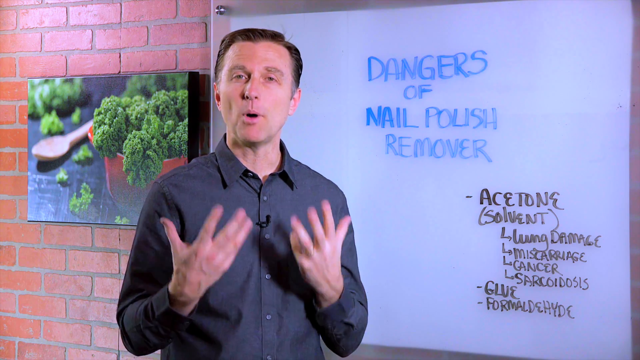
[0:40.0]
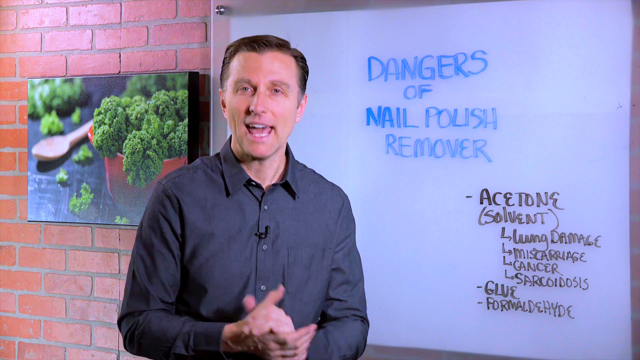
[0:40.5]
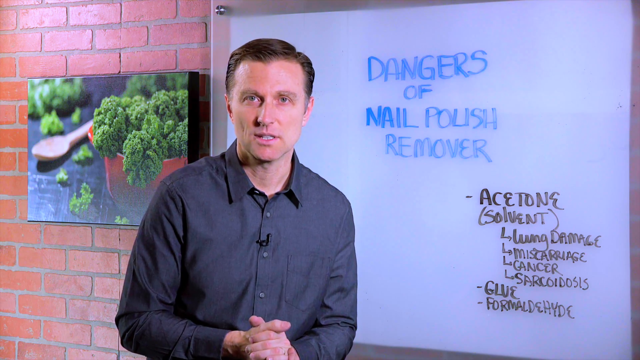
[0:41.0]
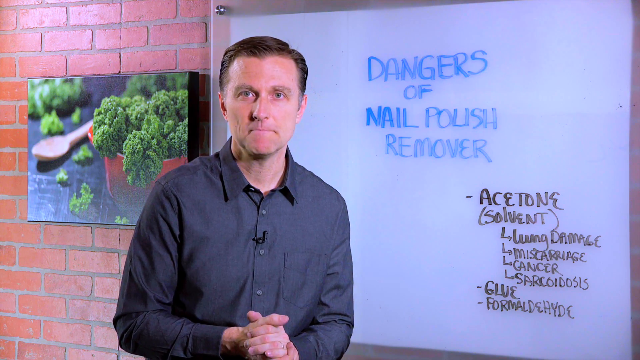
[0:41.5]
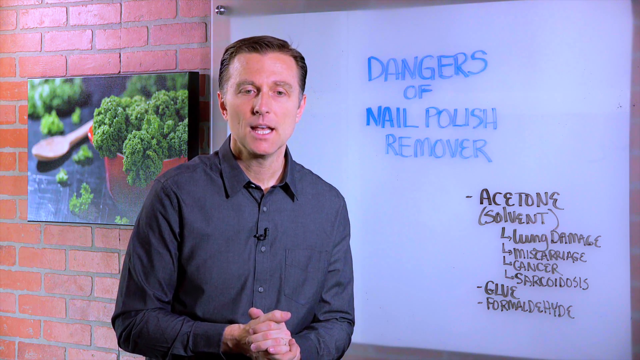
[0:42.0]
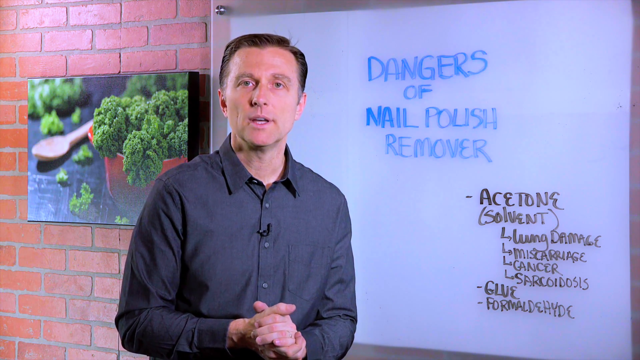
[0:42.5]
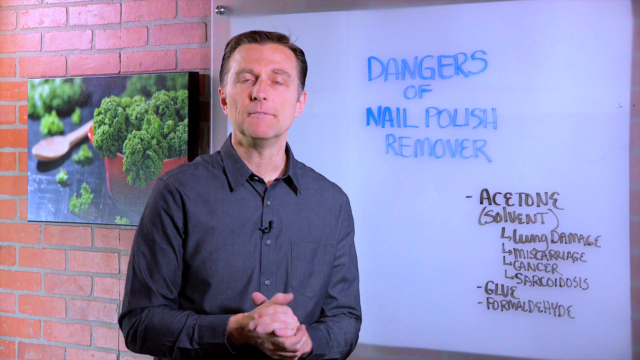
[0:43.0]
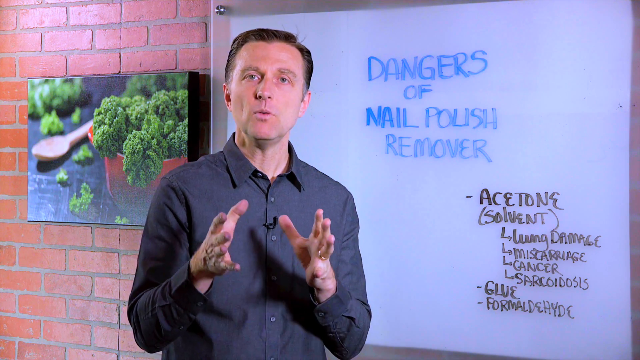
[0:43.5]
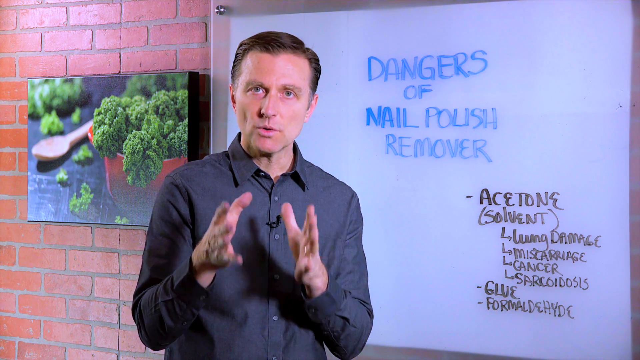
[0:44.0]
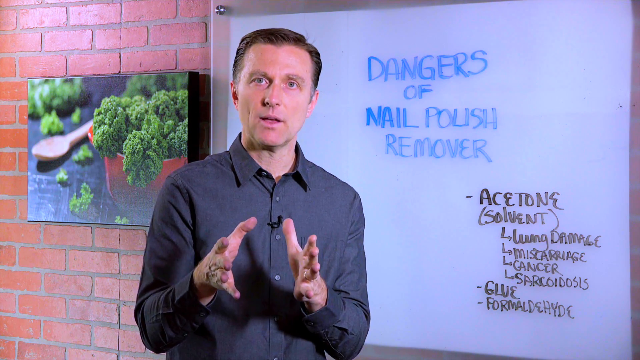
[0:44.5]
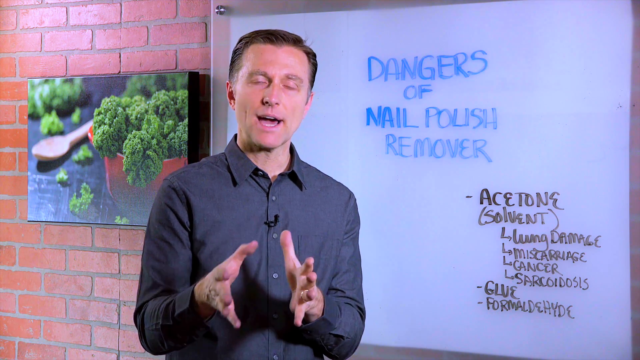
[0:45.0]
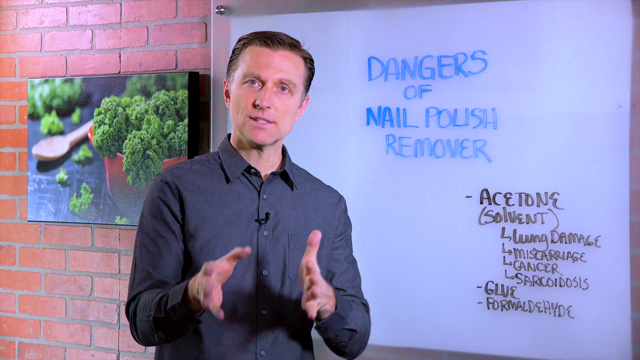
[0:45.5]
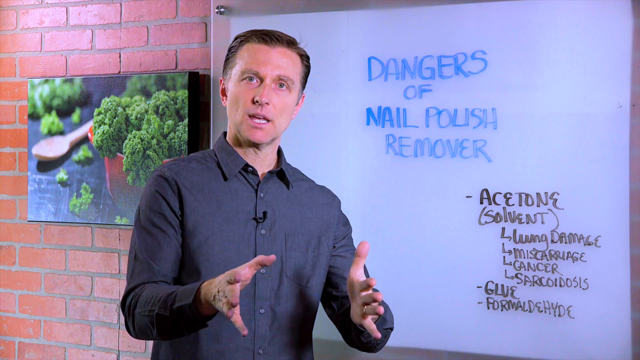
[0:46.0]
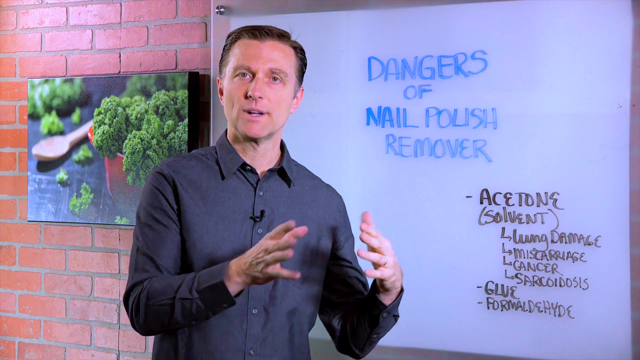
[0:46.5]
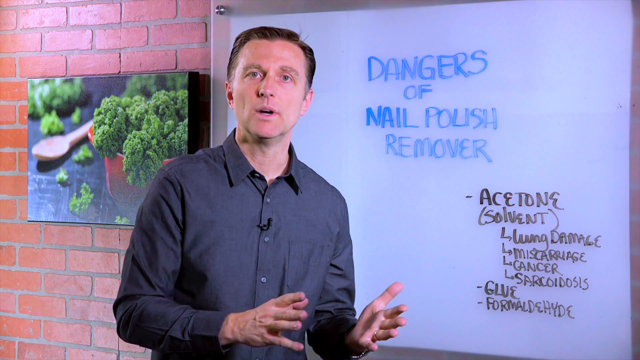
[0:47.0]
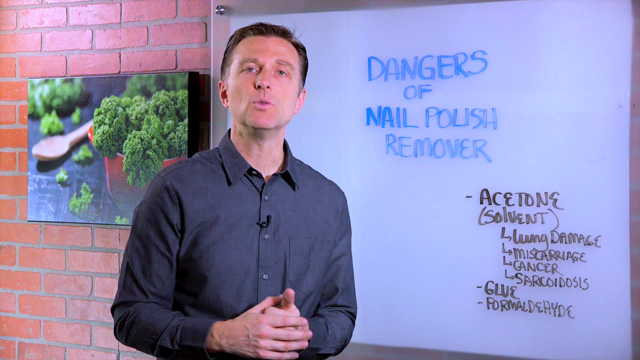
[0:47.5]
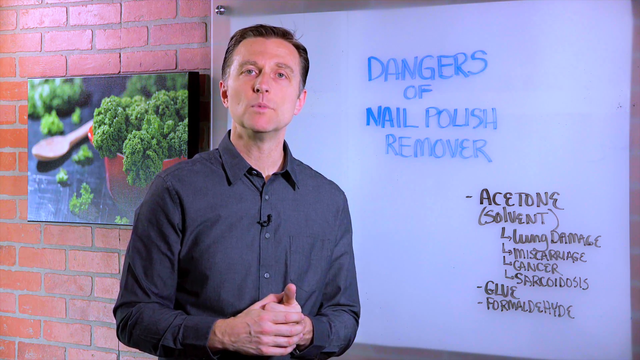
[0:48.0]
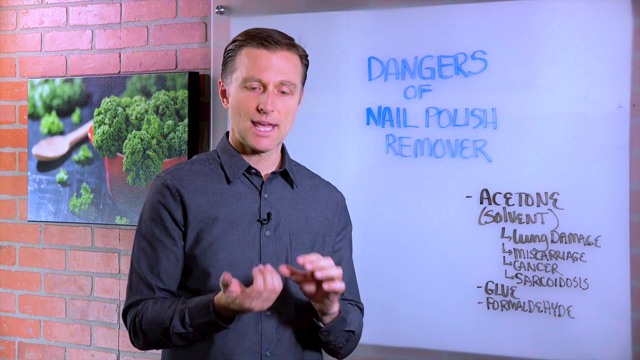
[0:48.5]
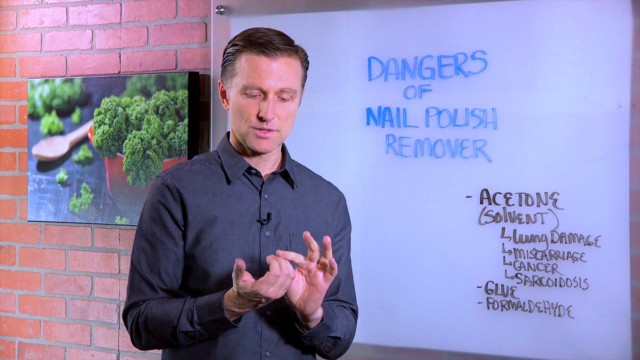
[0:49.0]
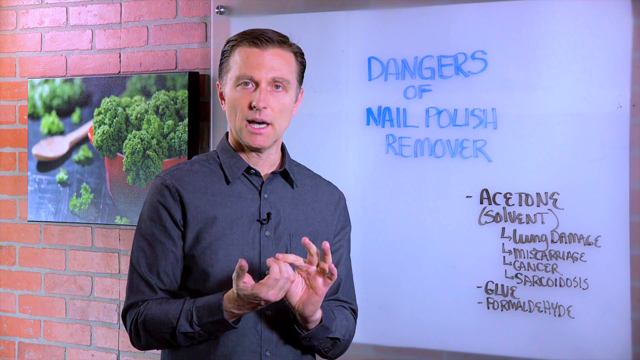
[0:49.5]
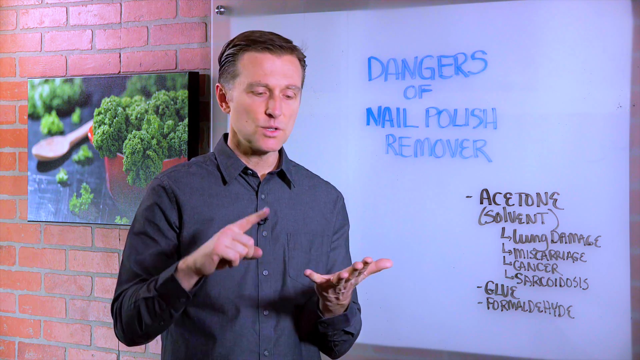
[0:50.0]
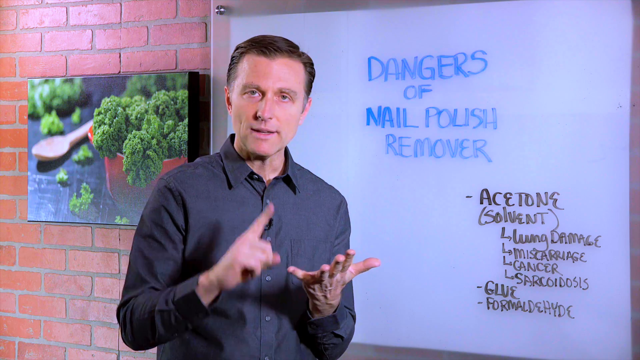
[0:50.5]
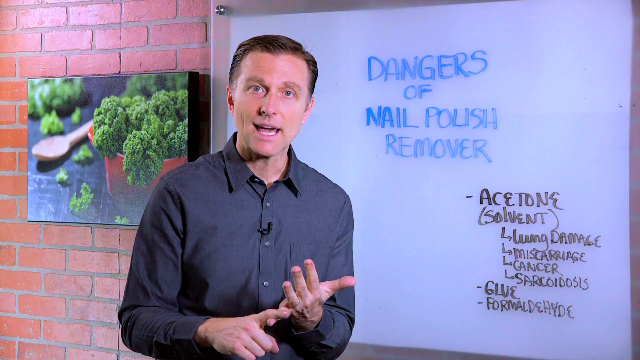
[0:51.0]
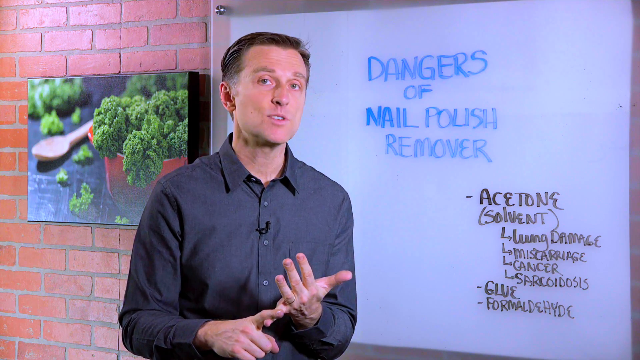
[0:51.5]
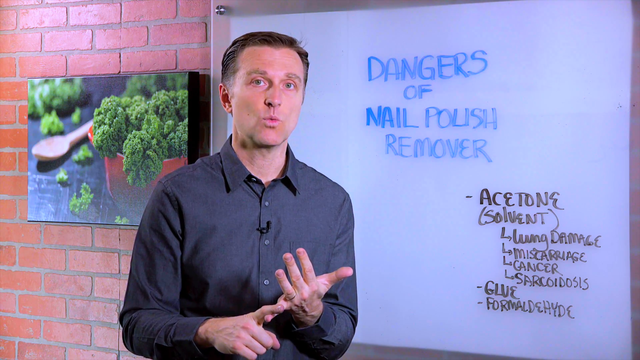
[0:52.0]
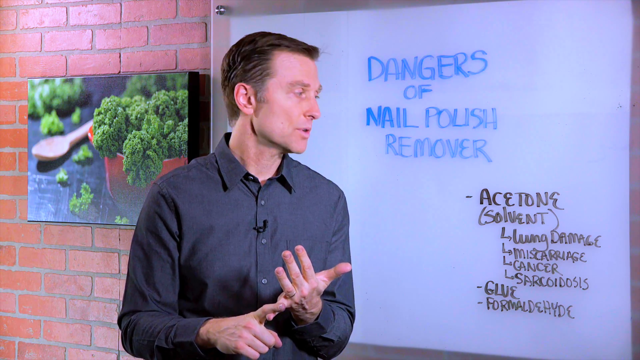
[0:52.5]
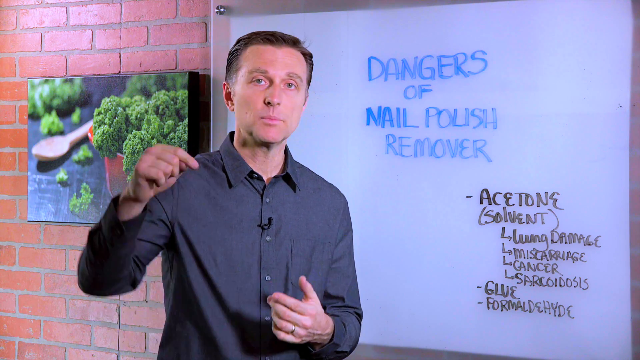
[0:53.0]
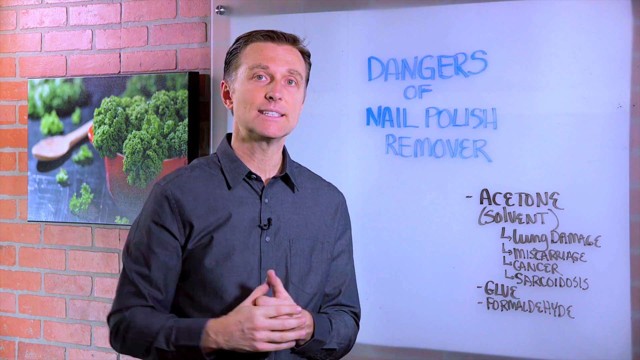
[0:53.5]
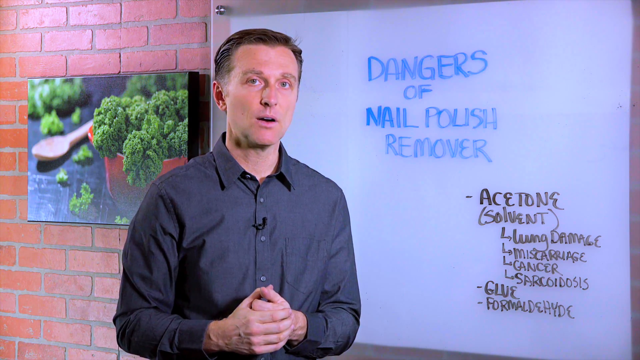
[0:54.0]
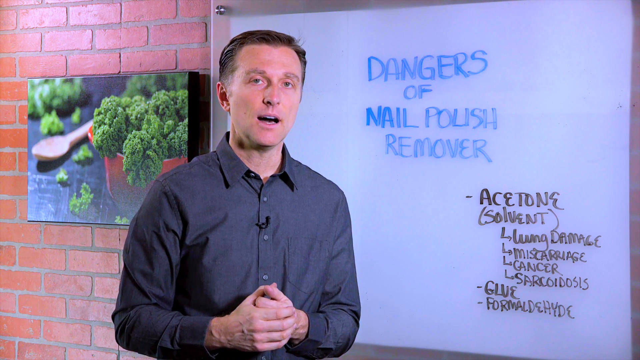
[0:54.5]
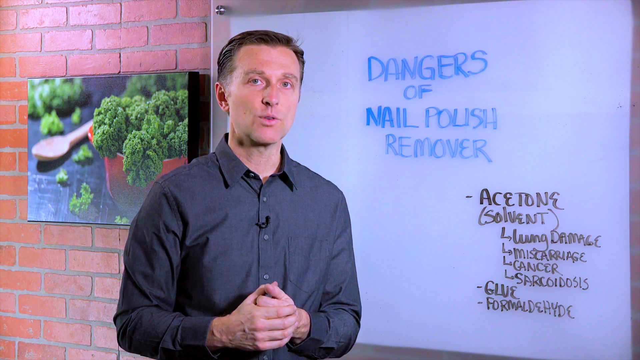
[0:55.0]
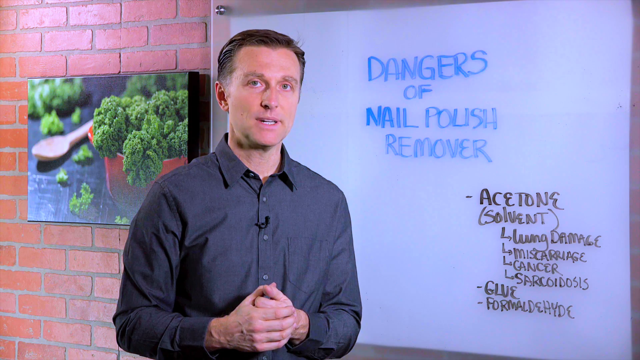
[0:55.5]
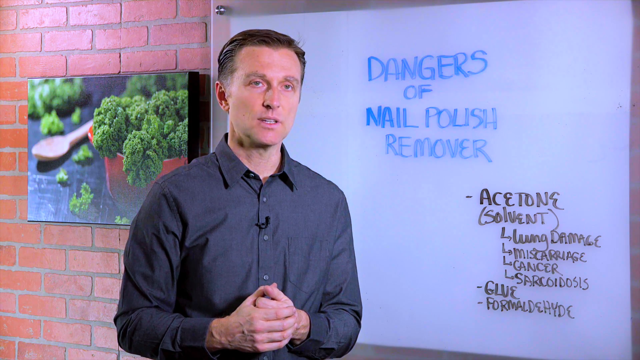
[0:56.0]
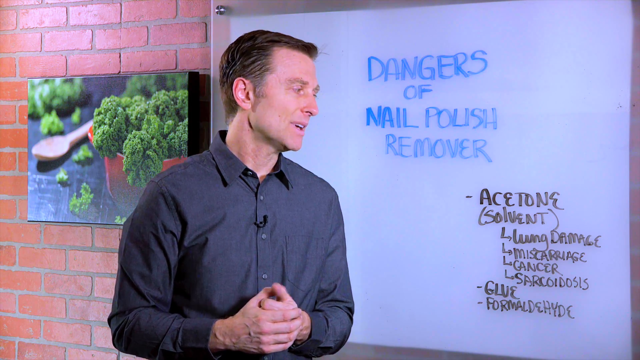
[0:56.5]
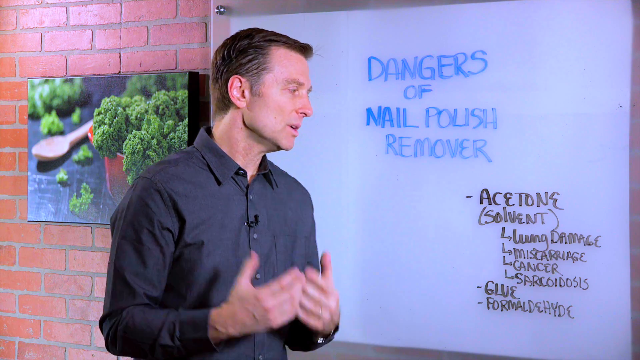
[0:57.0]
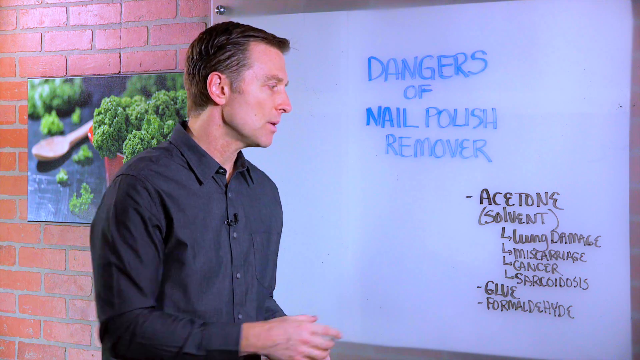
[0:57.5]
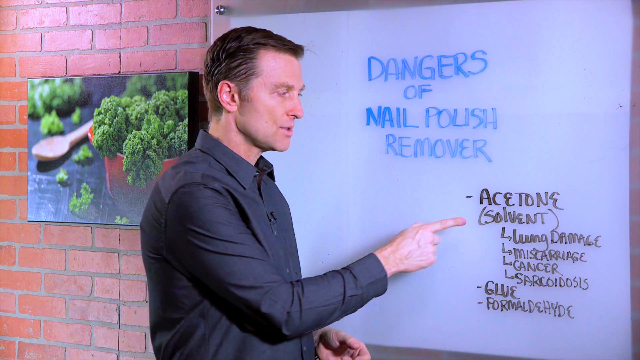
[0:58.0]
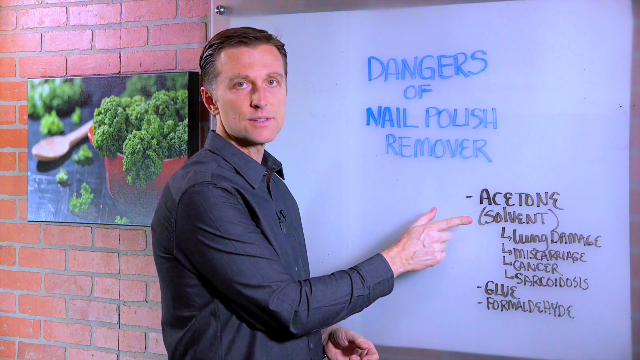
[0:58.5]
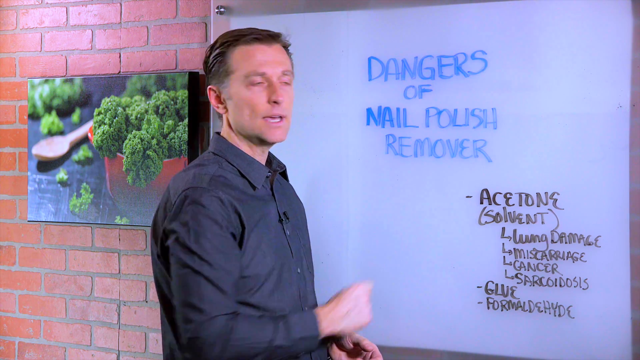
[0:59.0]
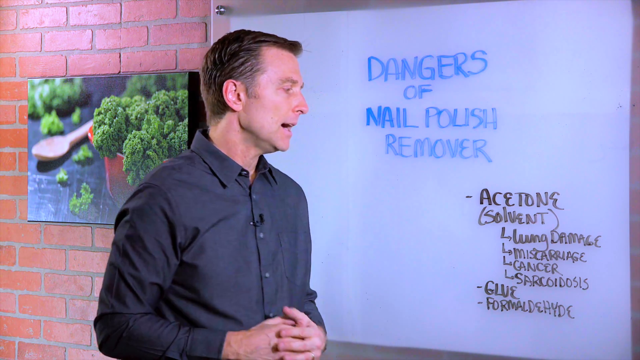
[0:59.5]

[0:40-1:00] The gentleman keeps talking and is very expressive, showing the backs of his hands with his palms facing him. He talks directly to the camera, brings both hands forward and makes different gestures. He puts his right hand on the pinky of his left hand as if counting or making a point. At times he glances back at the words on the board. Toward the end, he points to the word under "acetone," "solvent," tapping the board a few times next to it with his right pointer finger.